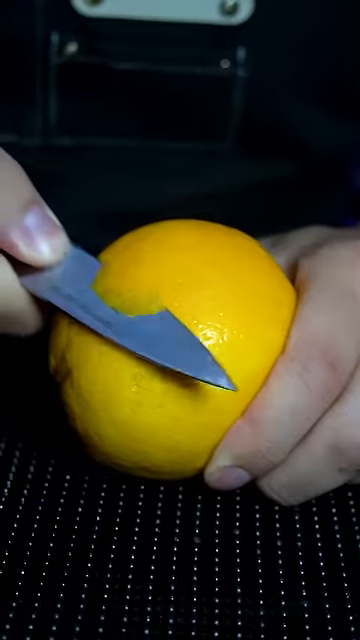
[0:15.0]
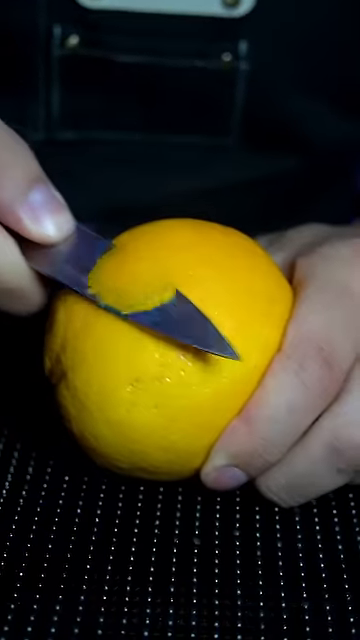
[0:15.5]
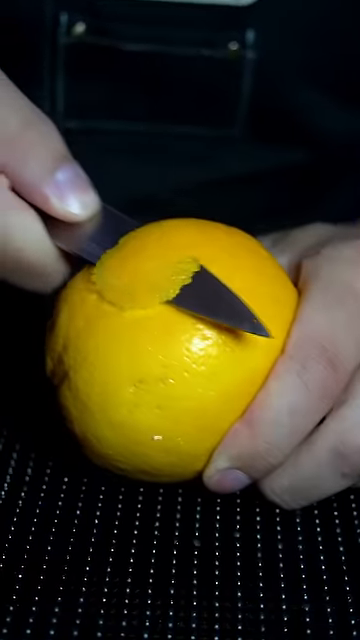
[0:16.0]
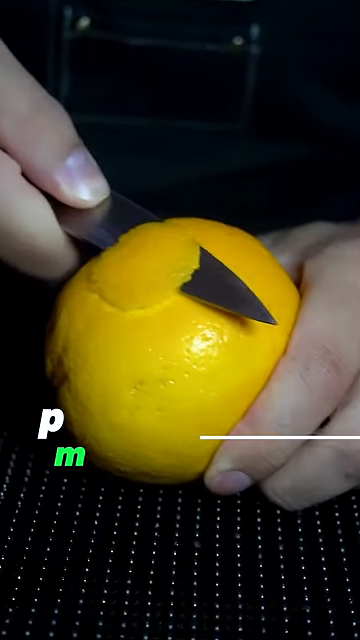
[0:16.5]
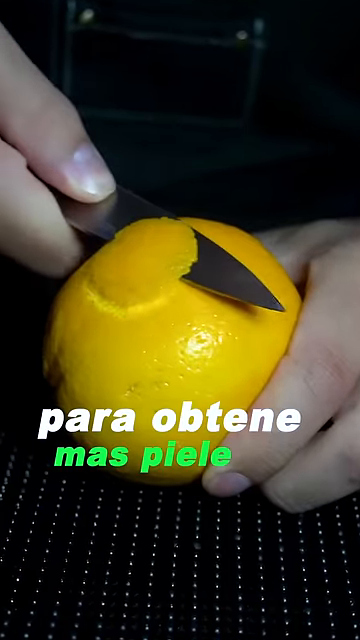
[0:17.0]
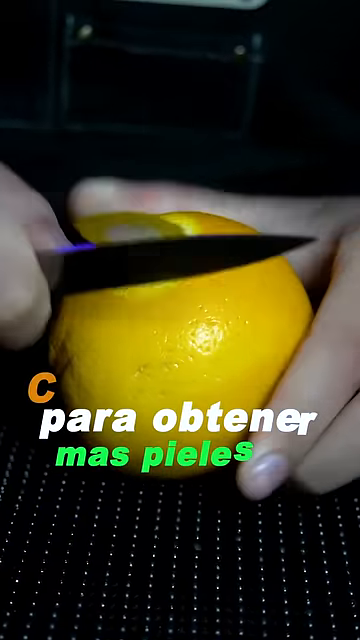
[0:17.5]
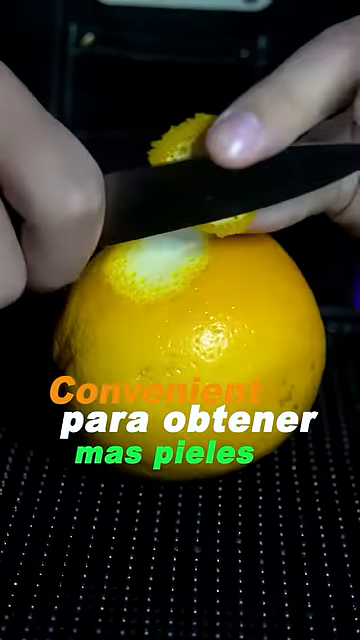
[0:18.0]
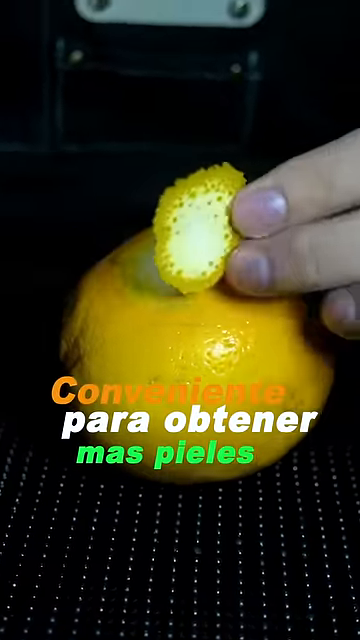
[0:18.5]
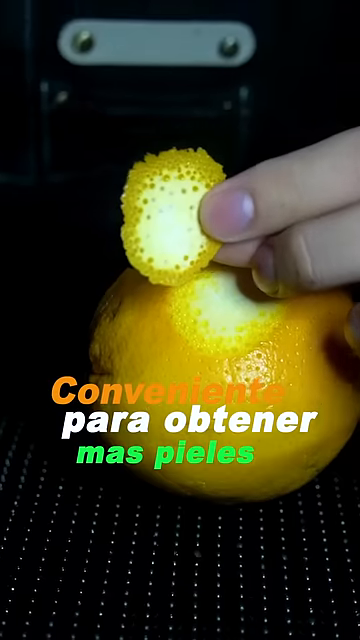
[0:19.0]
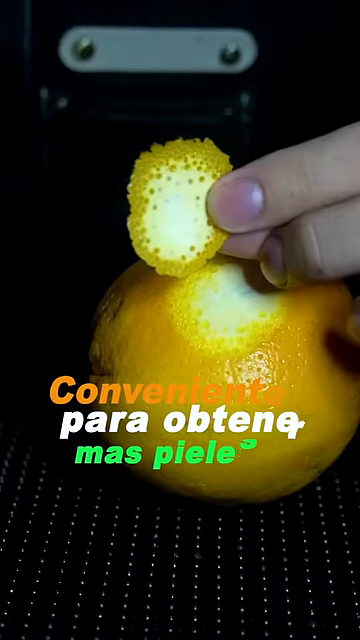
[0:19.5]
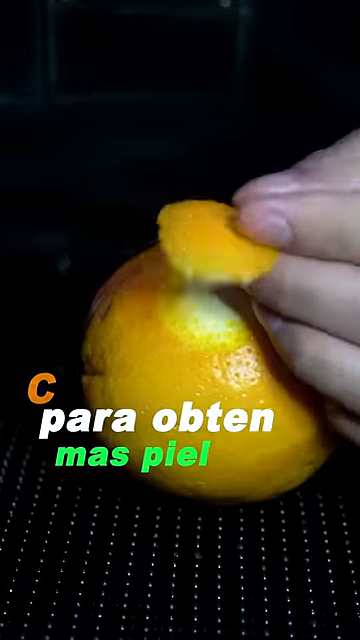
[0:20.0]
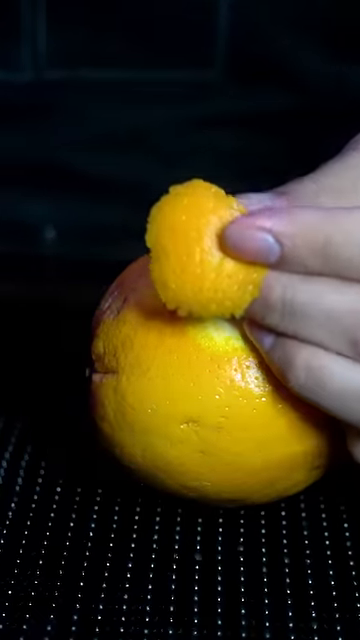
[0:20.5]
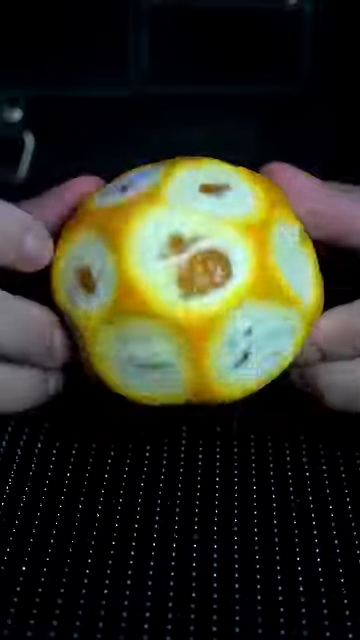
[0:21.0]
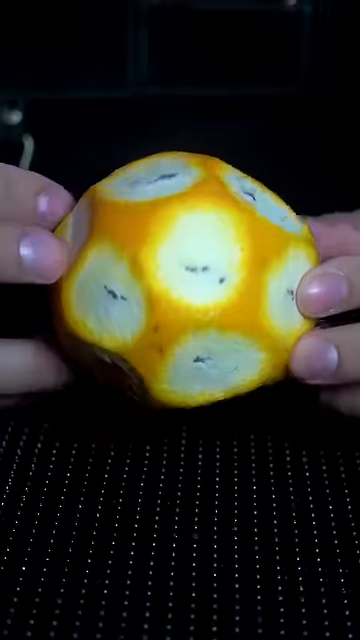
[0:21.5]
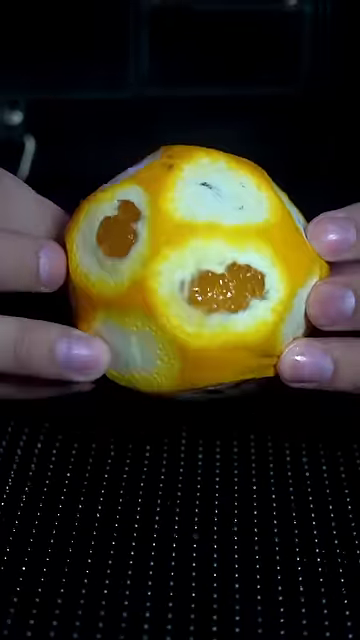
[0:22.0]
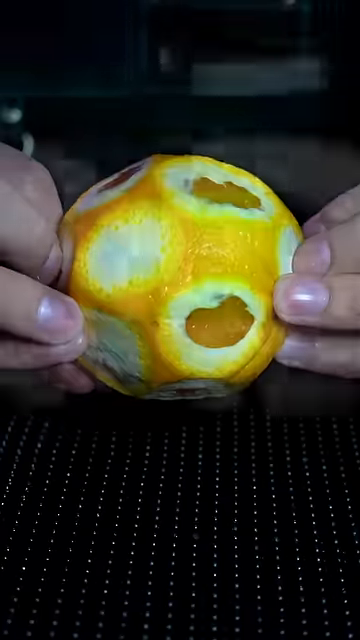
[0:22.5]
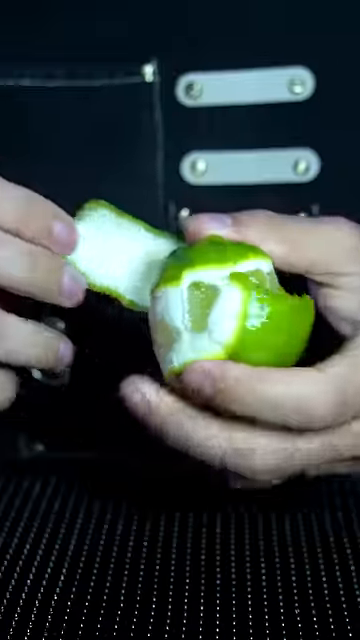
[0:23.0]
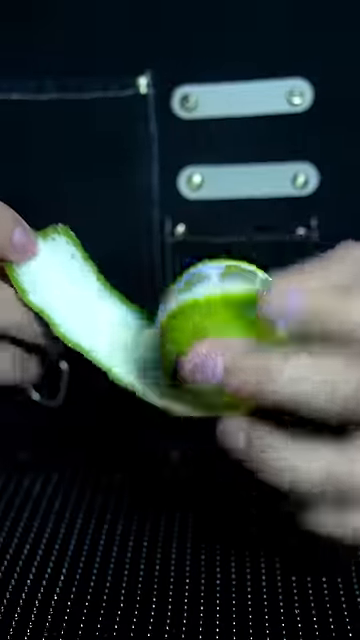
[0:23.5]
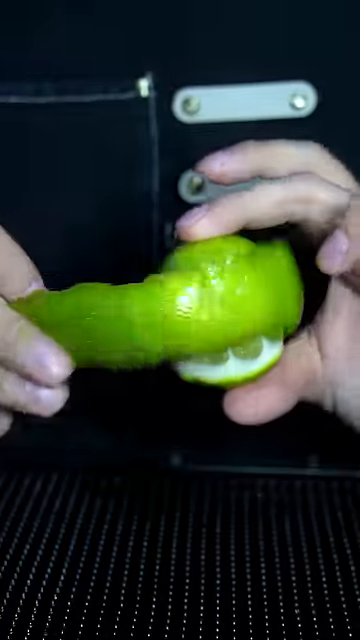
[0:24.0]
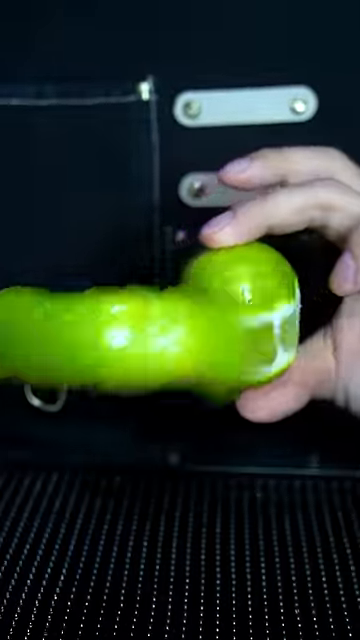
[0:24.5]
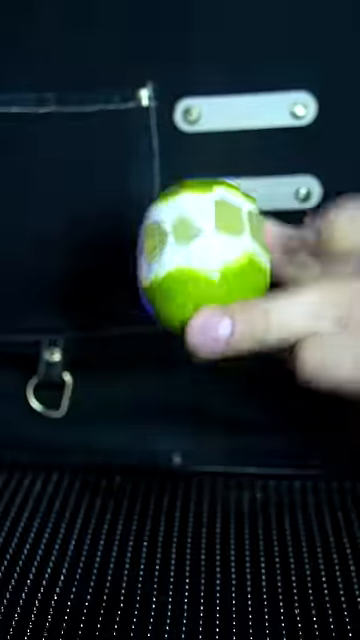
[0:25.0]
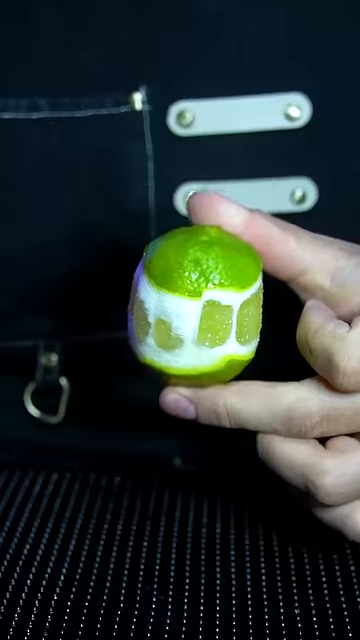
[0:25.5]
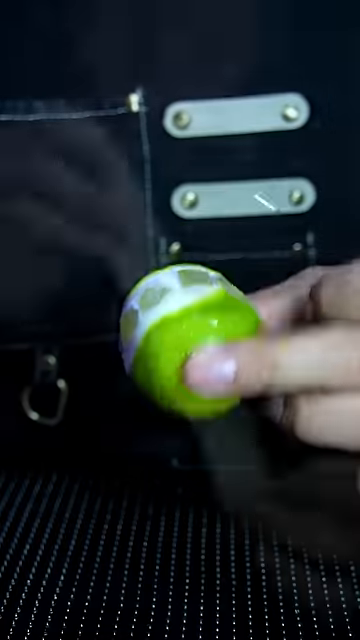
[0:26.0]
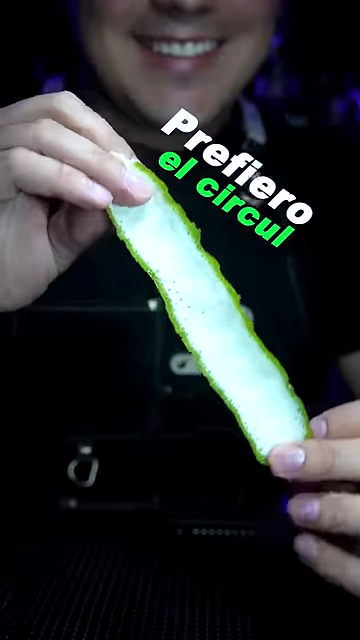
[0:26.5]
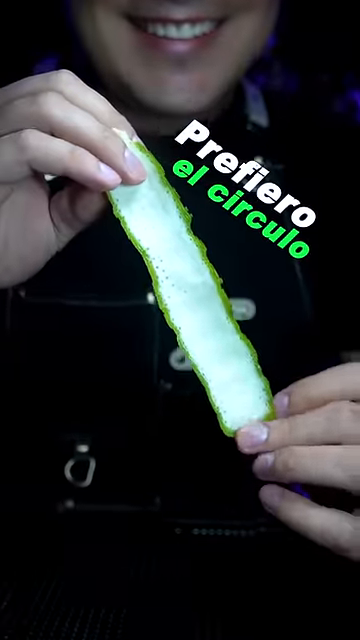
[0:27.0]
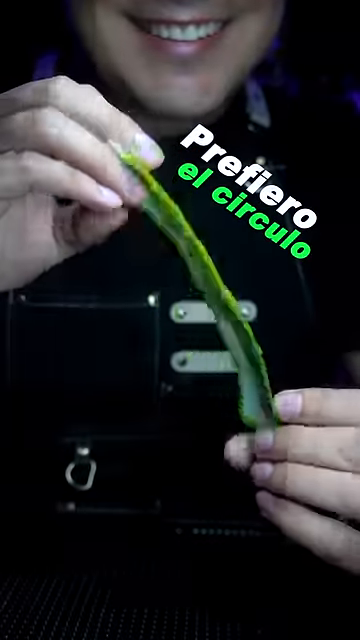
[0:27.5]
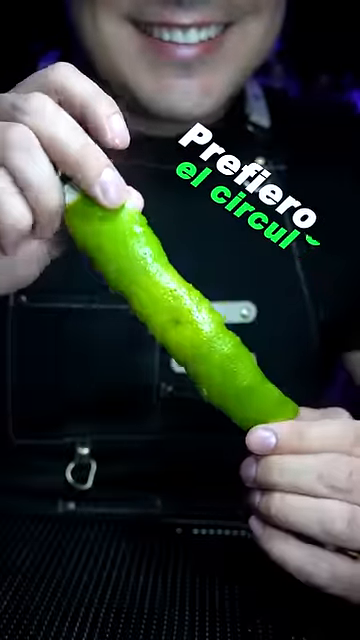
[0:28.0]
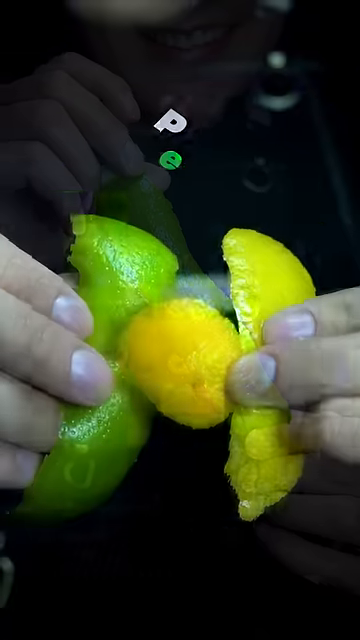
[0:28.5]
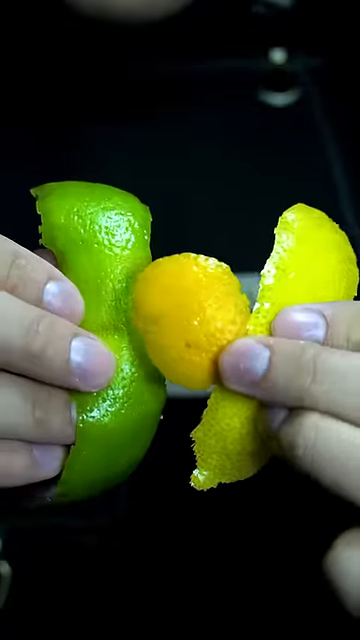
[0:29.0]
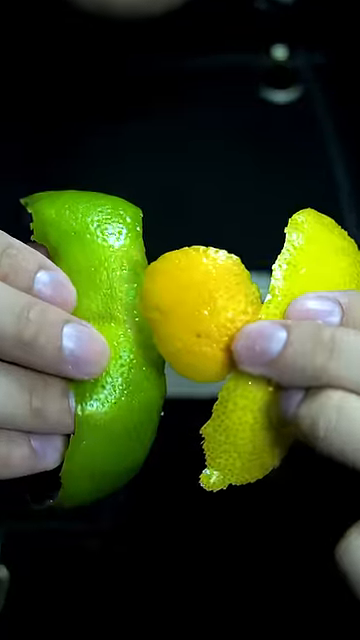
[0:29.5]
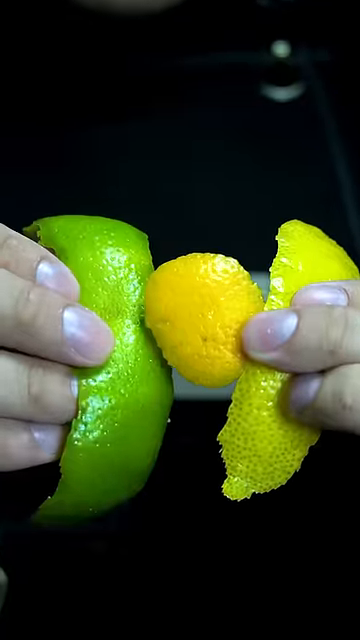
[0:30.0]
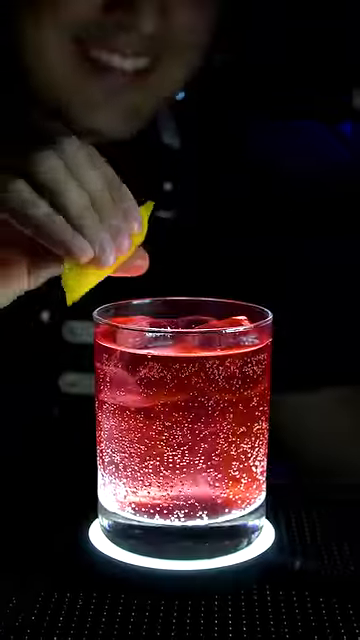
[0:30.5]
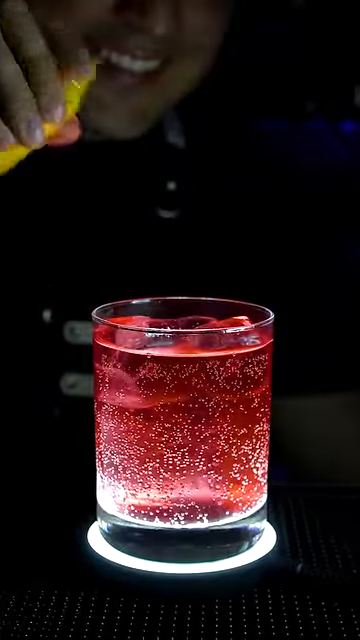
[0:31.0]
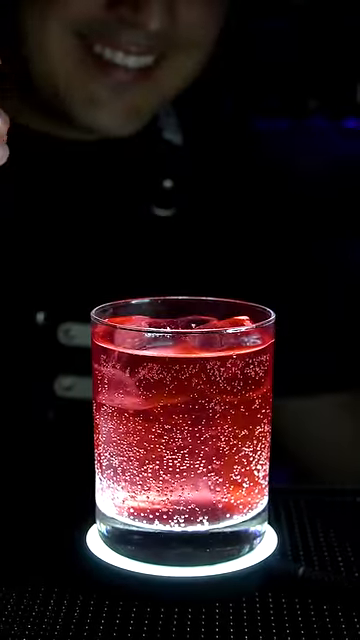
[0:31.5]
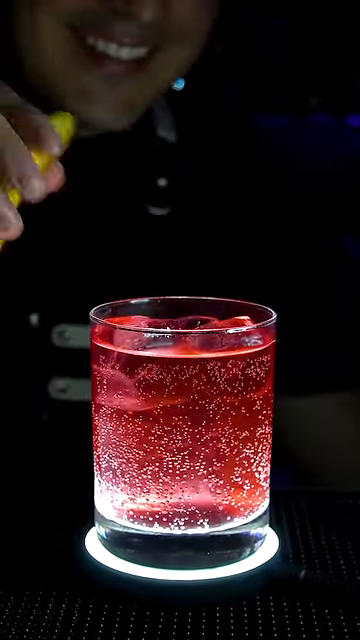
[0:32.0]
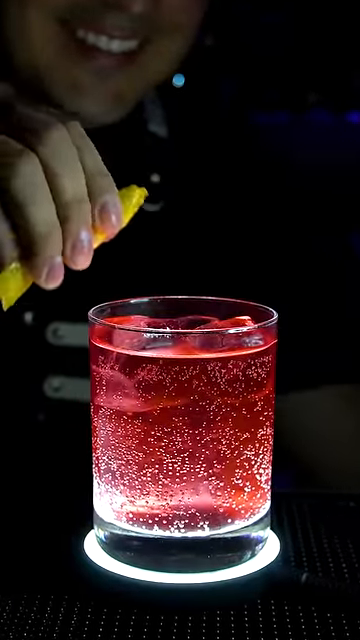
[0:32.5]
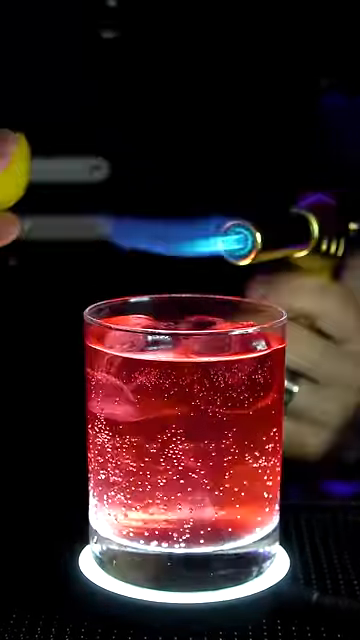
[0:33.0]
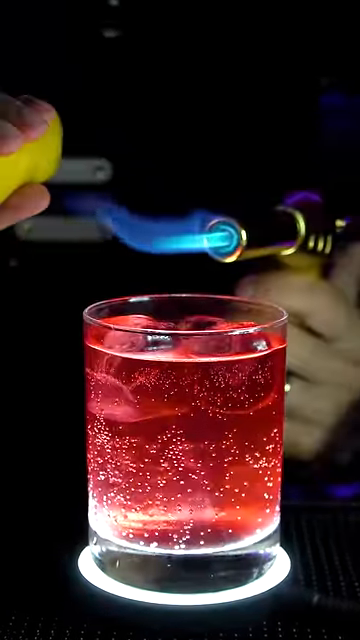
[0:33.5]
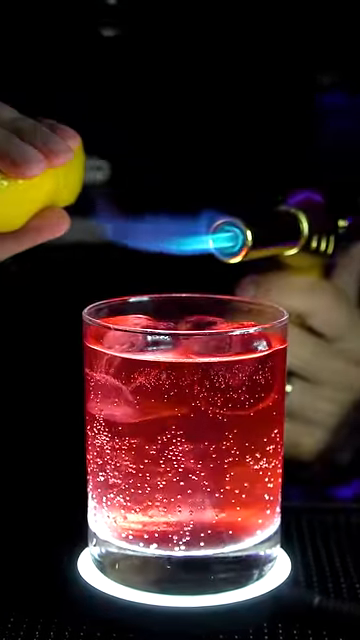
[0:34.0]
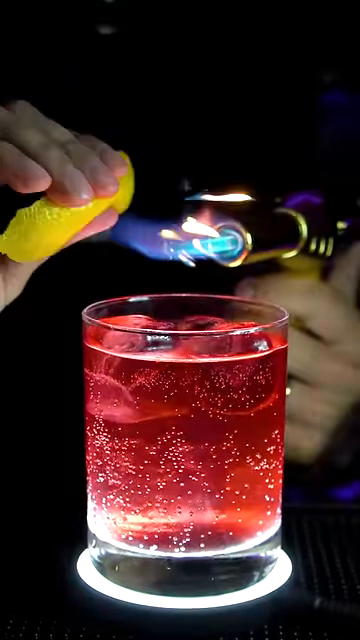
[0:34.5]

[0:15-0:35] The bartender uses the paring knife to take very thin, little round skins off the orange, then takes a horizontal piece of skin from the lime, so he has three different kinds of peel, orange, lemon and lime, in different sizes. He squeezes a peel, apparently so the oils from the skin are lit by his mini torch, and the torch kind of lights the oils from the citrus skins; what he does with the peel afterward is not shown. The drink below is red, kind of a light pink cranberry color, and is lit from the bottom by a white ring of light that shines up into the glass, showing bubbles. The citrus skin is very thin, with little pith on the back side, mostly just the top portion of the skin.